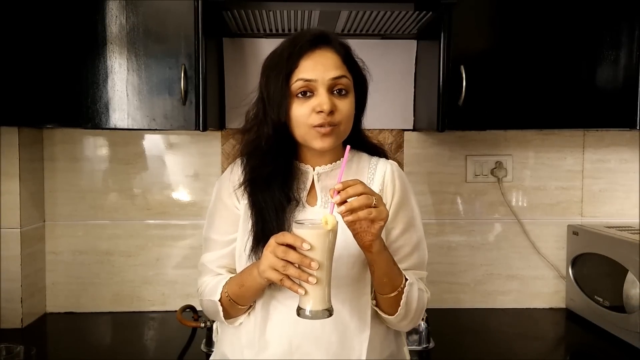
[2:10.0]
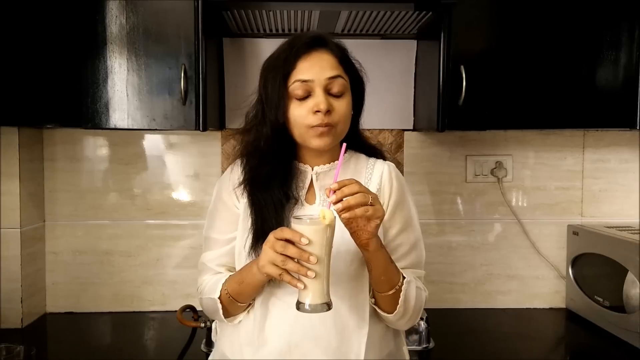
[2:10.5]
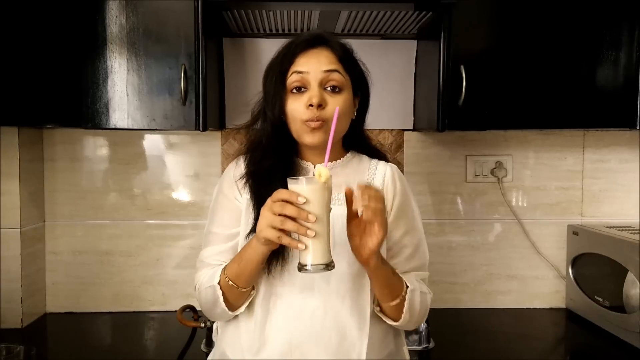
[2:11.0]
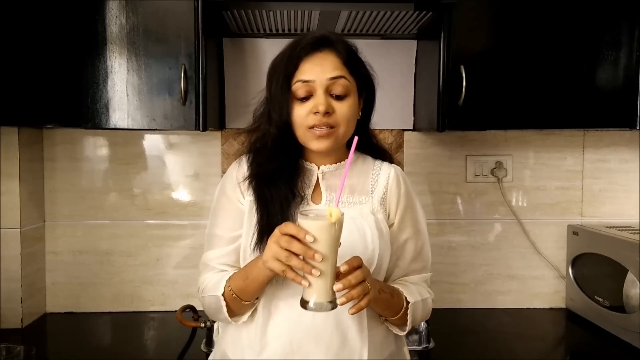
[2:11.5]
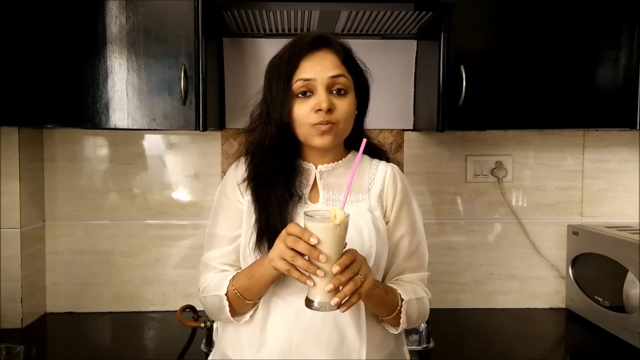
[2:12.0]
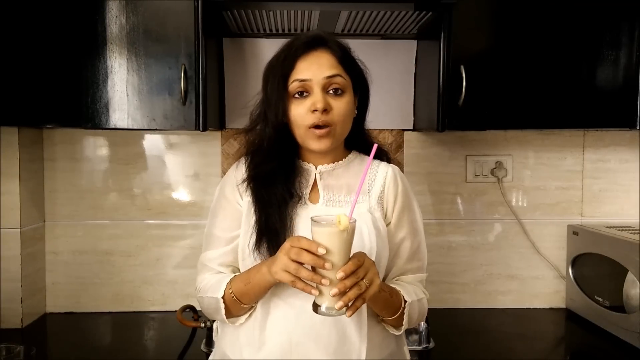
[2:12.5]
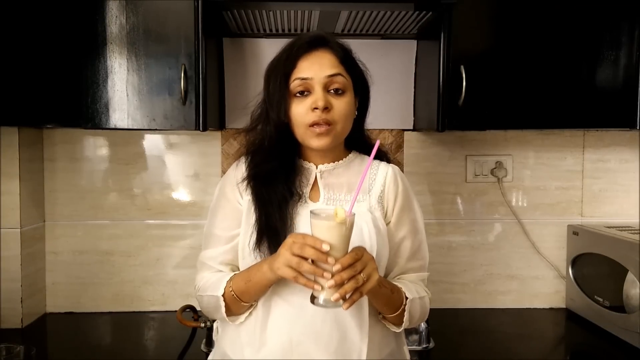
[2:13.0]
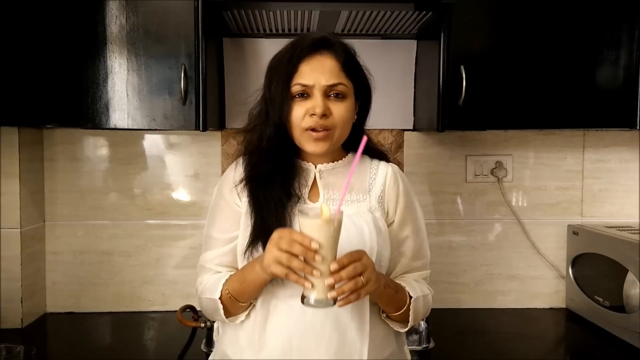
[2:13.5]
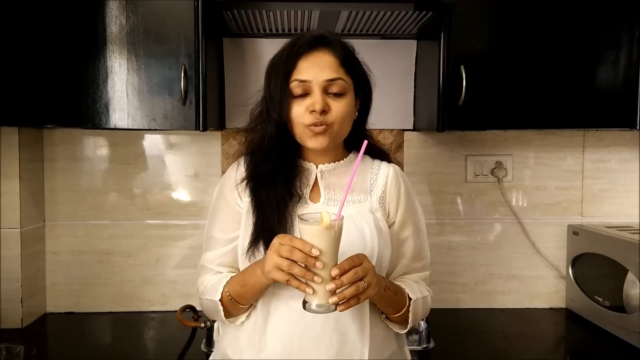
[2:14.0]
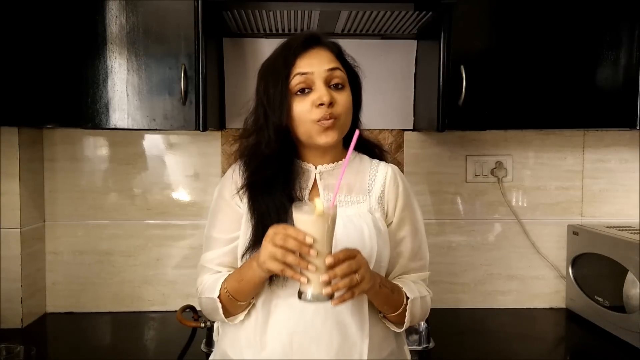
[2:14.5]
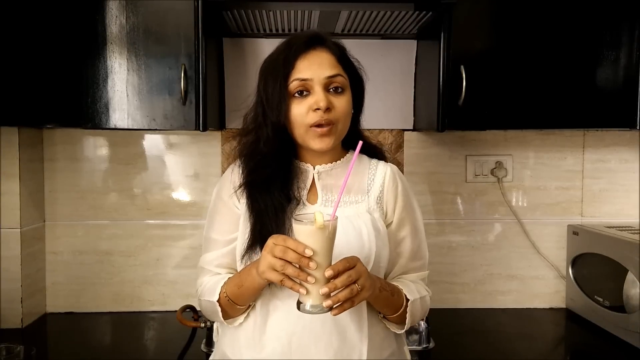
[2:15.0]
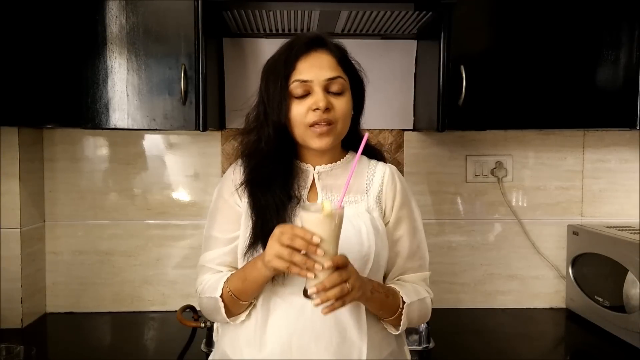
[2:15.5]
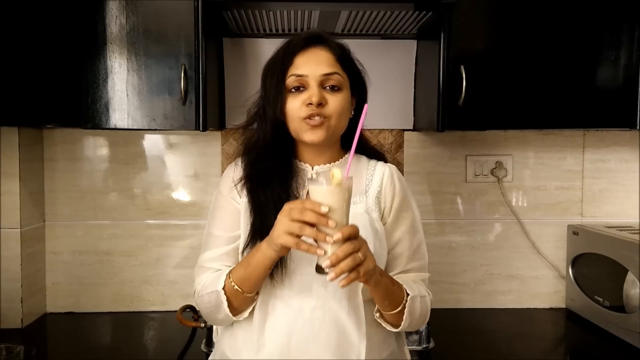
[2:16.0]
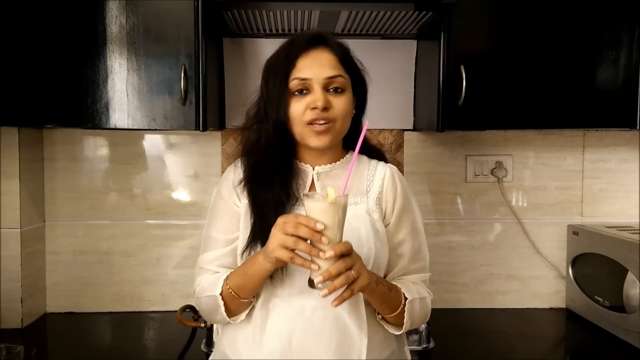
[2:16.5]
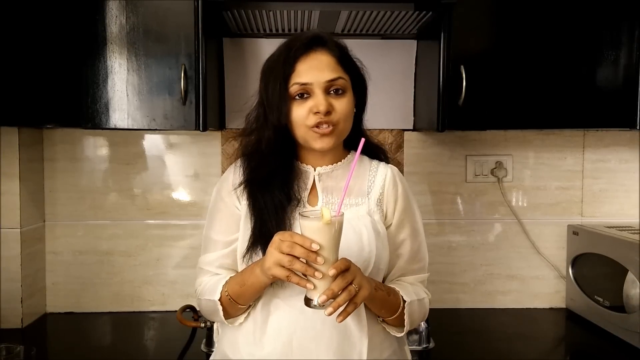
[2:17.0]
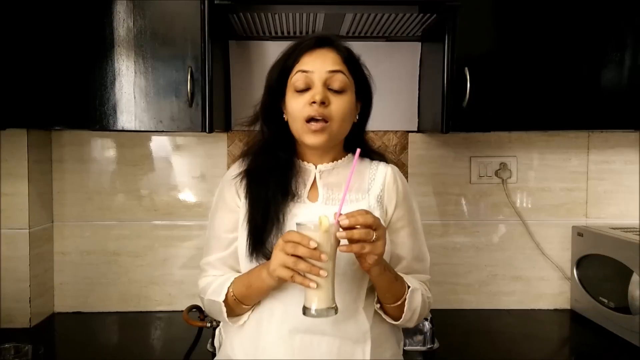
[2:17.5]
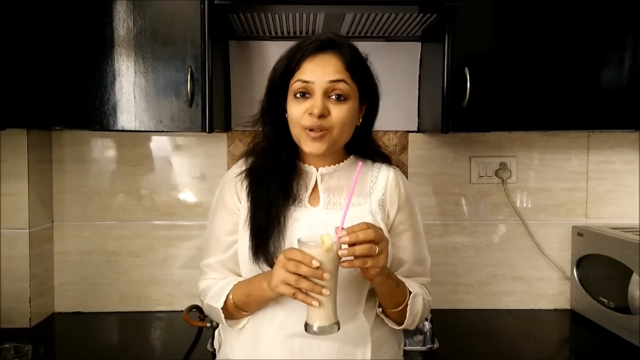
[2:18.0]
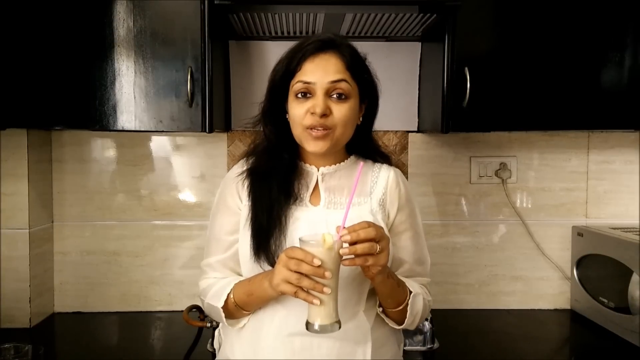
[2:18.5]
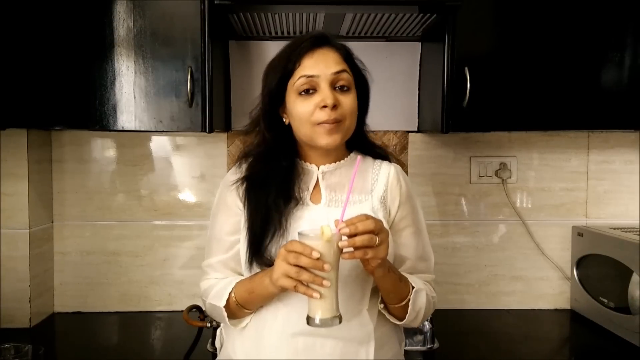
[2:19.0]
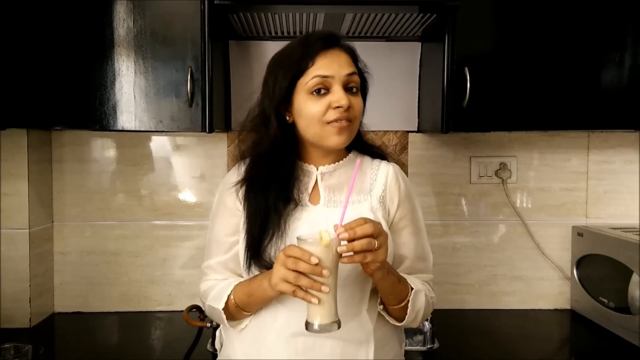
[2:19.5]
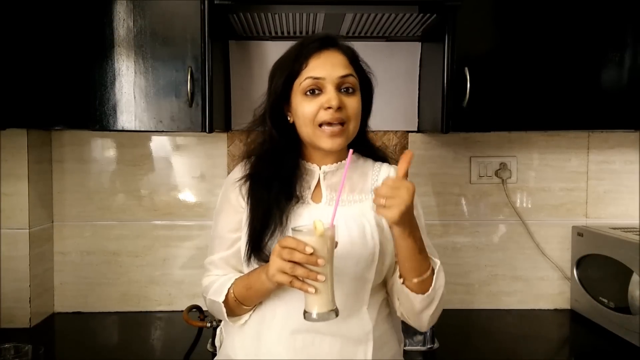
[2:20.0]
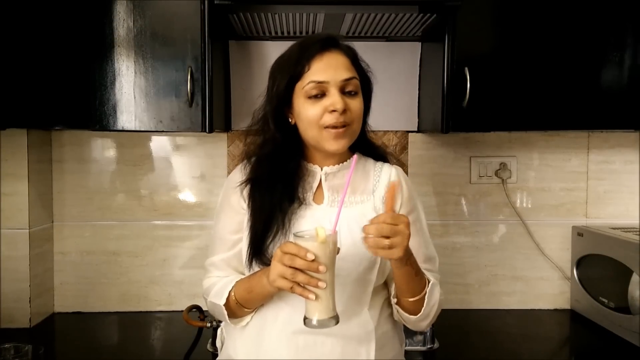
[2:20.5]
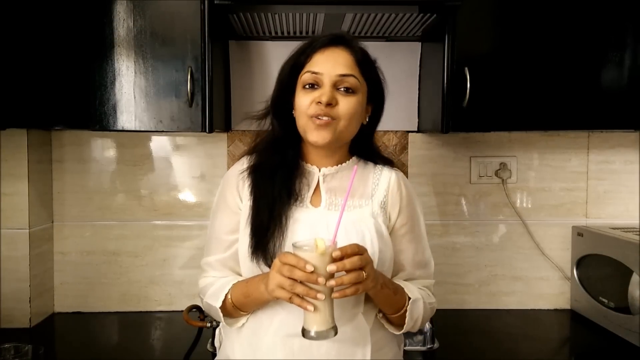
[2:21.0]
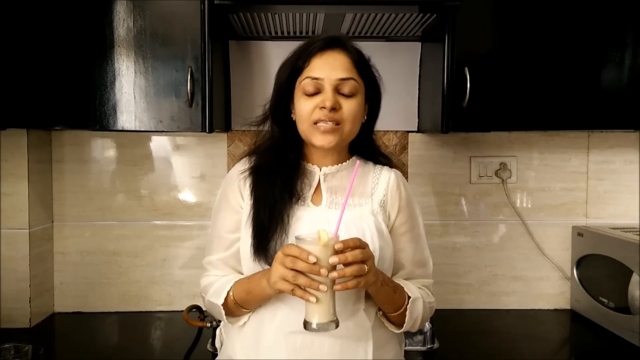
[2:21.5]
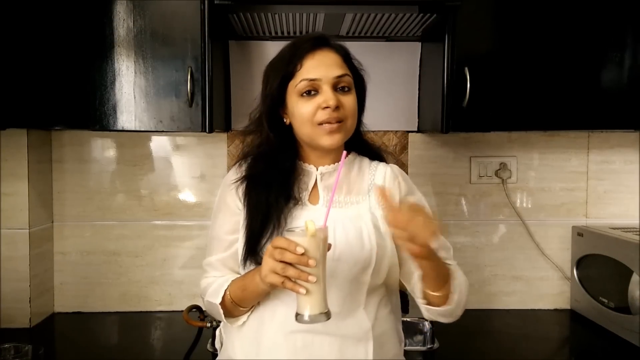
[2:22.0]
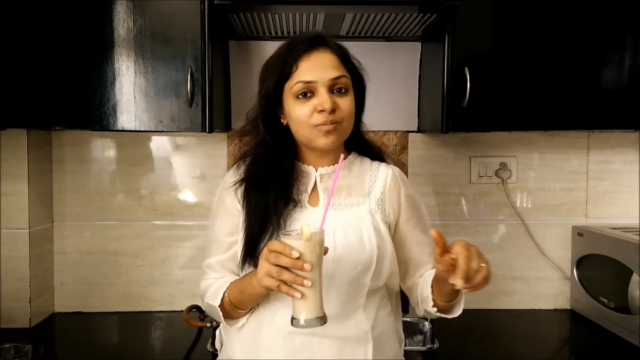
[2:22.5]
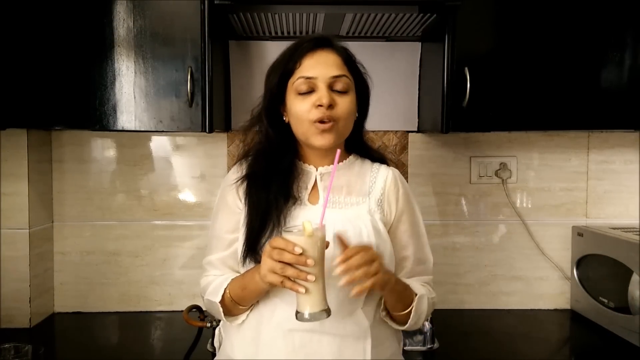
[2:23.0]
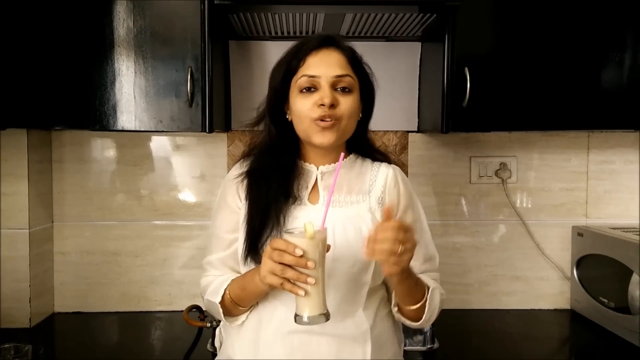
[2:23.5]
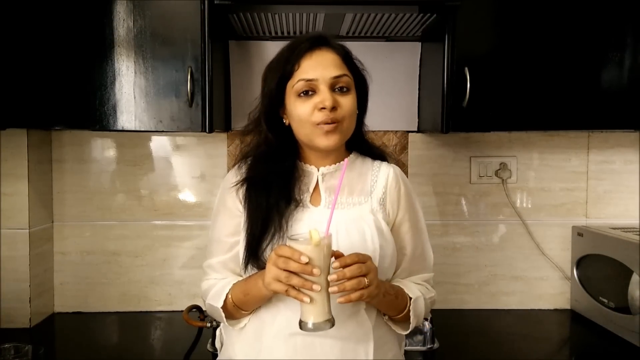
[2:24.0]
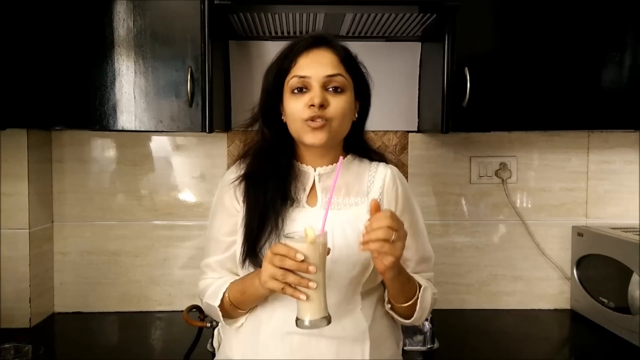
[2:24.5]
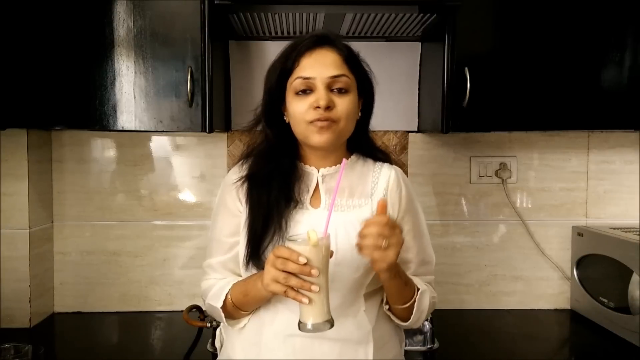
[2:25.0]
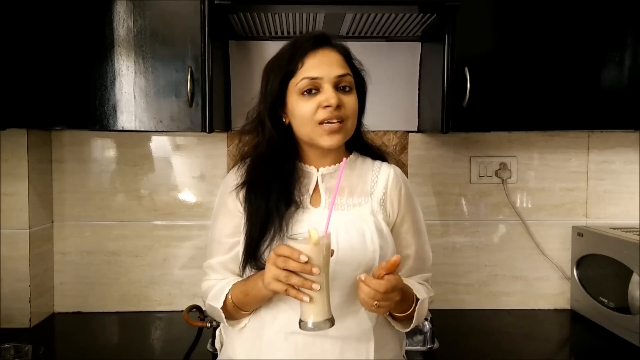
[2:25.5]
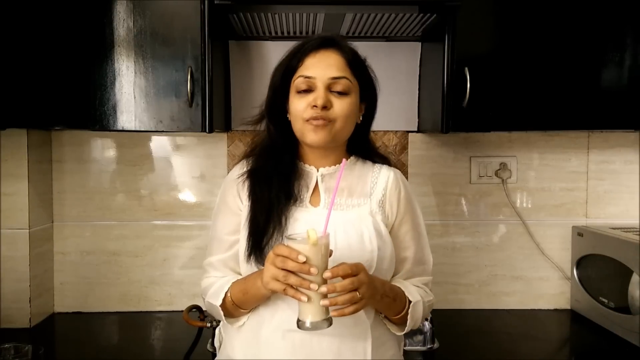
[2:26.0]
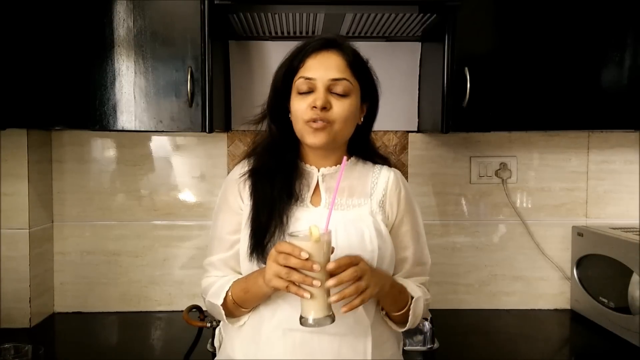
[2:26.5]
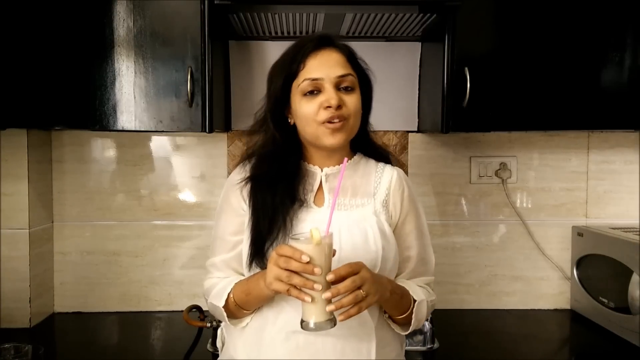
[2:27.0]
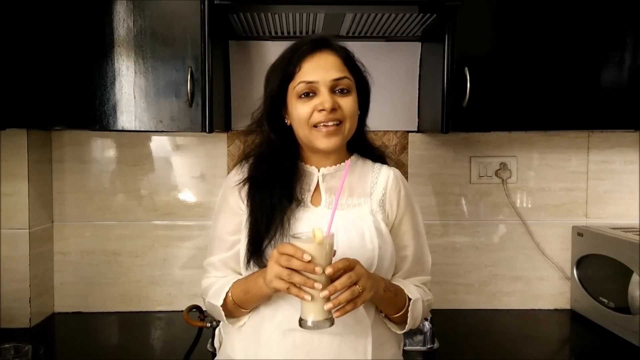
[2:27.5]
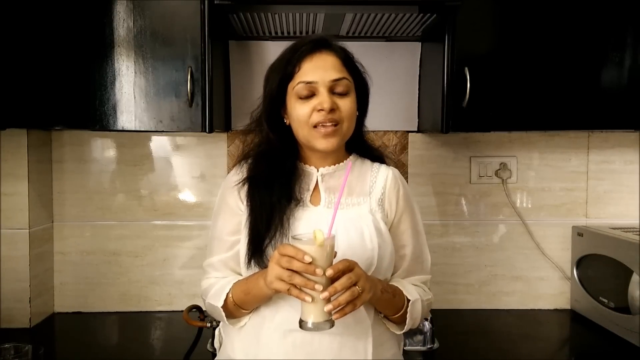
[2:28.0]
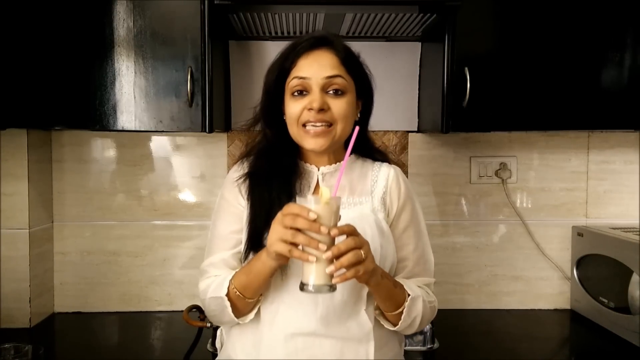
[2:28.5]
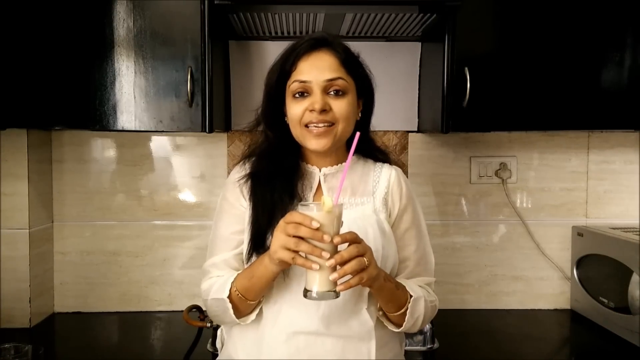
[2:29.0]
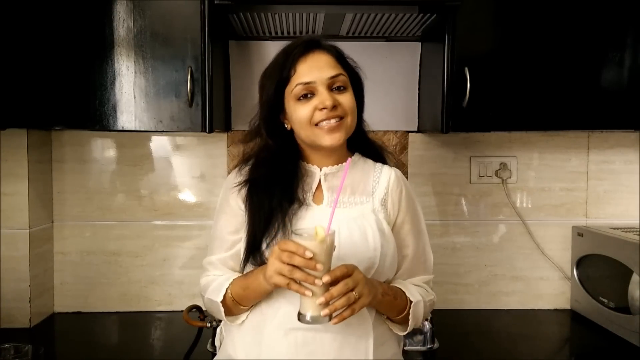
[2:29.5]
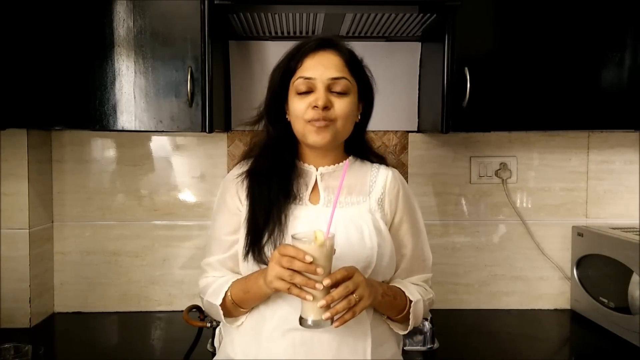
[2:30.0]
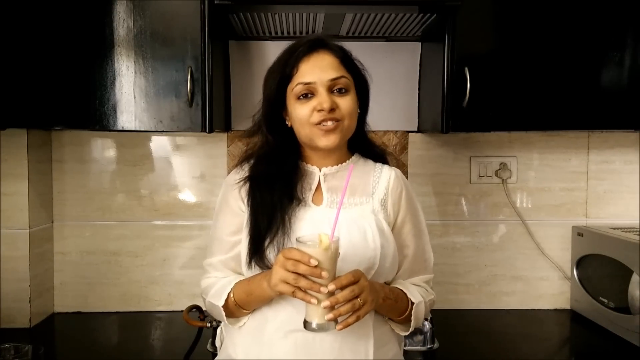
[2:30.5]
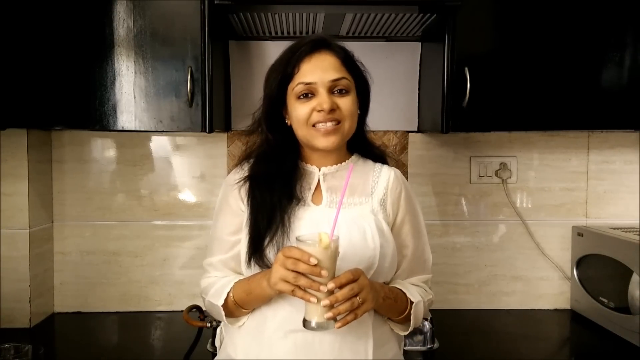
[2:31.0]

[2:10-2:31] A young woman stands in a kitchen wearing a white dress, with long black hair, a ring on her finger and a bangle on each wrist. Behind her are quite fancy-looking black kitchen cabinets and clear glass tiles of a sort of whitish, yellowish grey colour, and a silver toaster plugged into the wall socket. She holds a milkshake in her right hand, with a piece of banana on the side and a pink straw inside, which she holds with her left hand, while speaking to the camera. She then holds the milkshake with two hands, keeps speaking and brings it up and down. She gives a thumbs up with her left hand, then points down below and continues to gesture expressively. She keeps speaking to the camera with a big smile, looking pretty happy and cheerful with her milkshake.